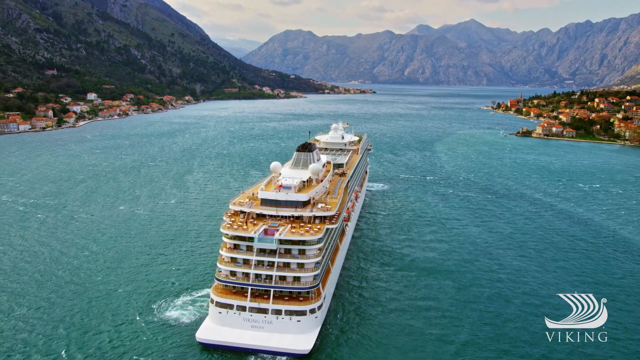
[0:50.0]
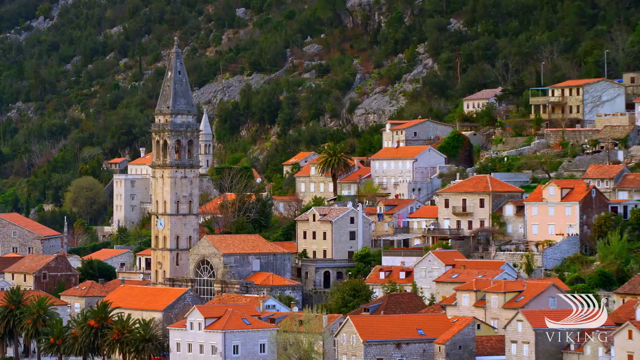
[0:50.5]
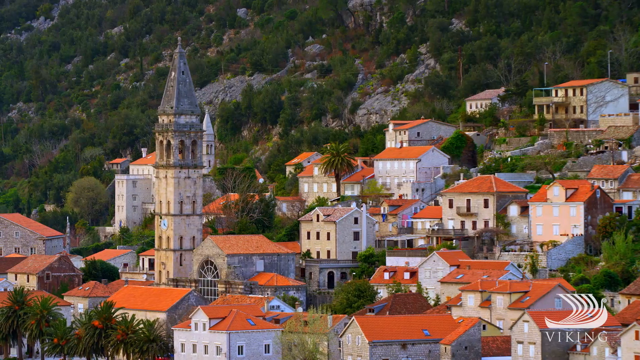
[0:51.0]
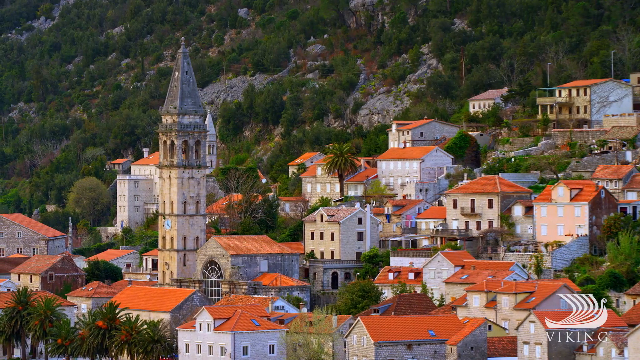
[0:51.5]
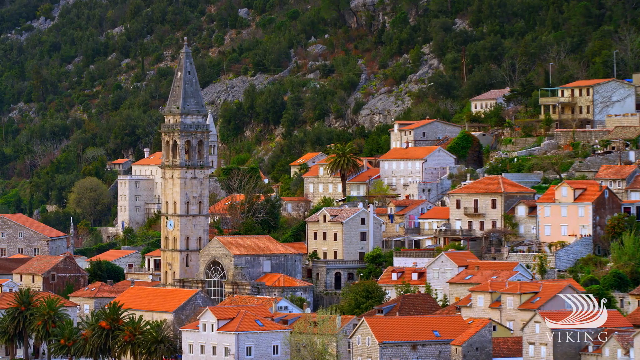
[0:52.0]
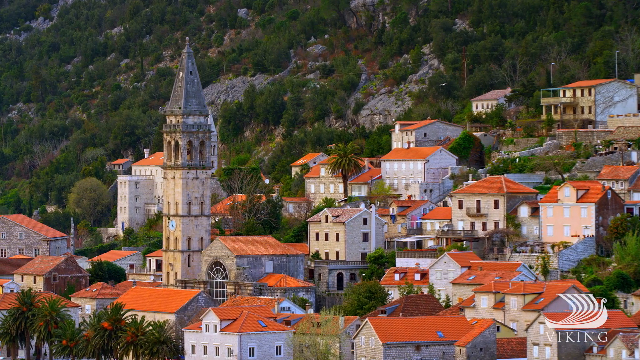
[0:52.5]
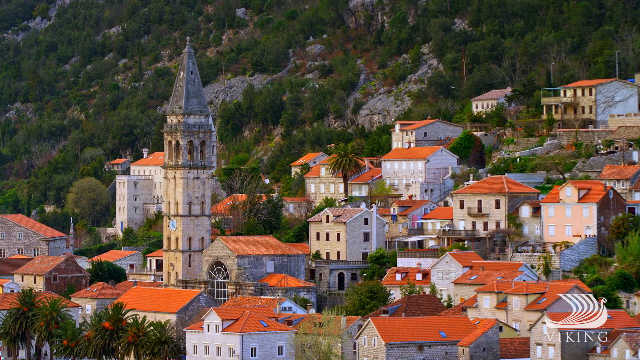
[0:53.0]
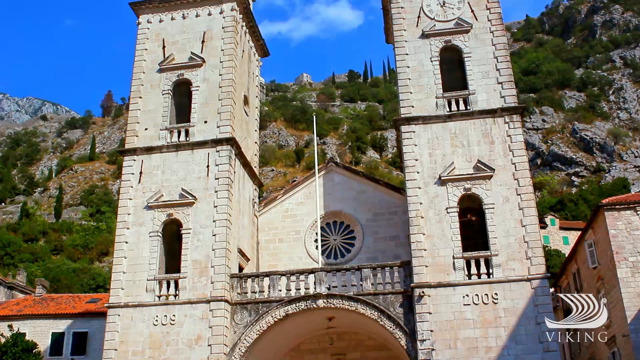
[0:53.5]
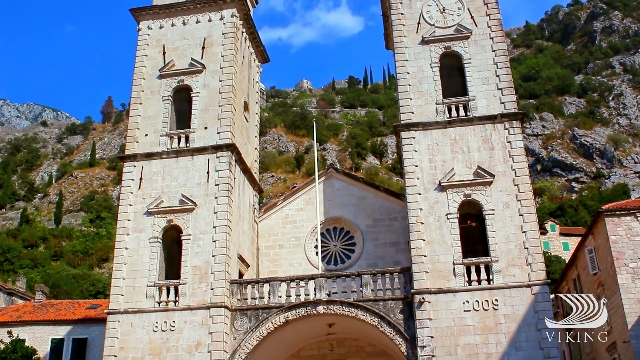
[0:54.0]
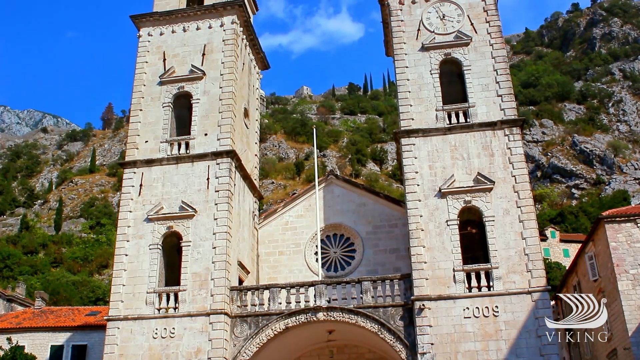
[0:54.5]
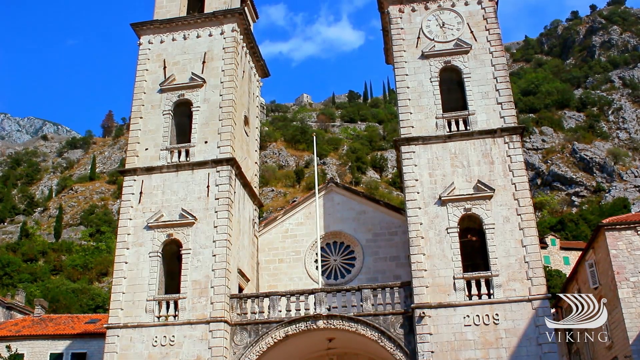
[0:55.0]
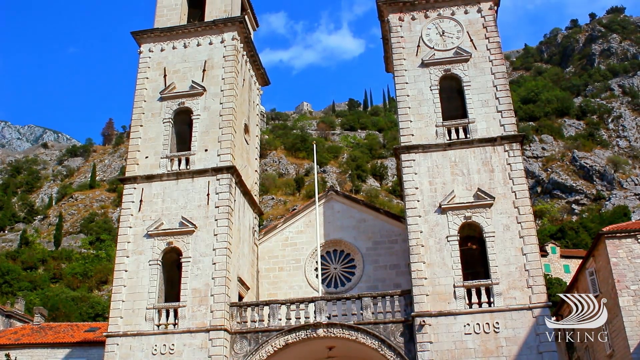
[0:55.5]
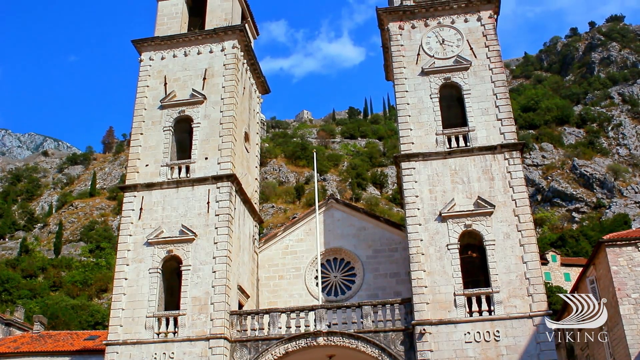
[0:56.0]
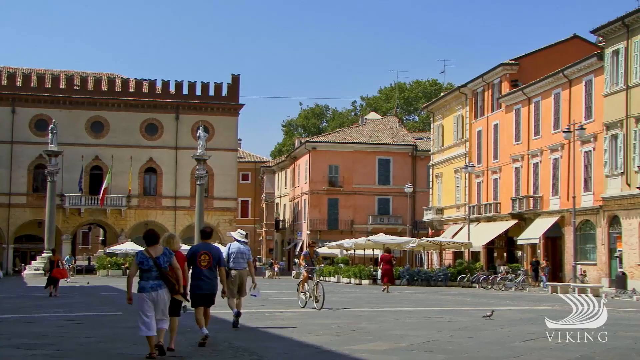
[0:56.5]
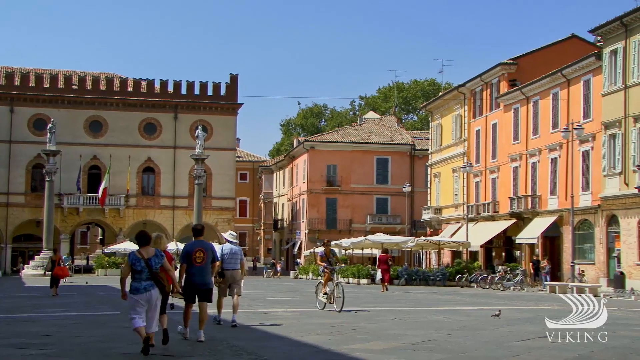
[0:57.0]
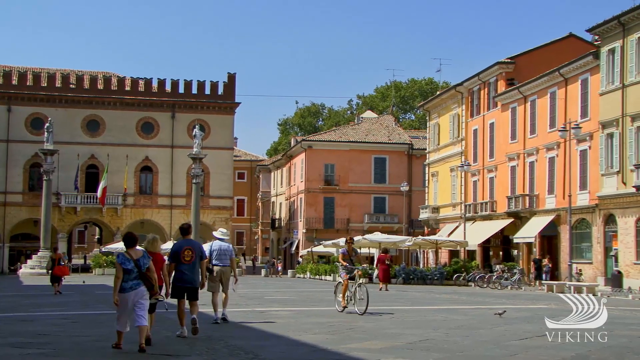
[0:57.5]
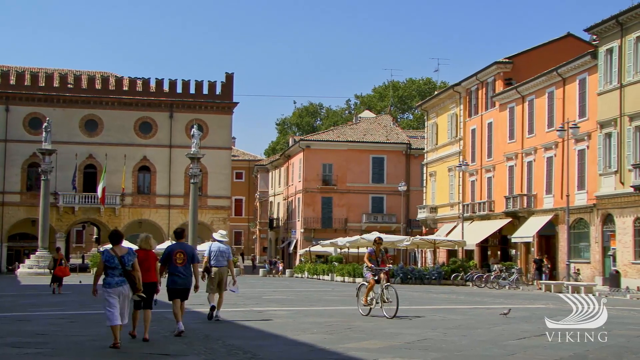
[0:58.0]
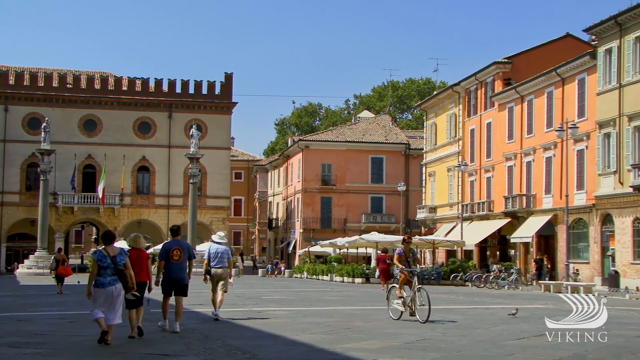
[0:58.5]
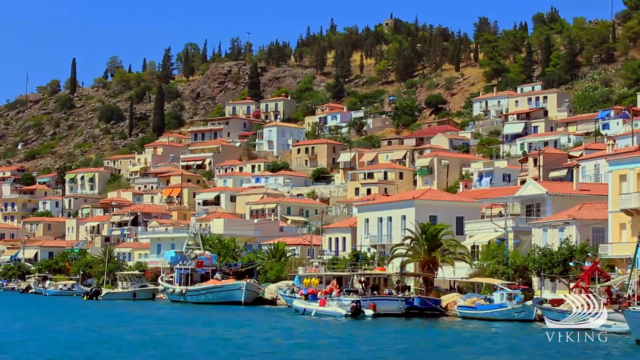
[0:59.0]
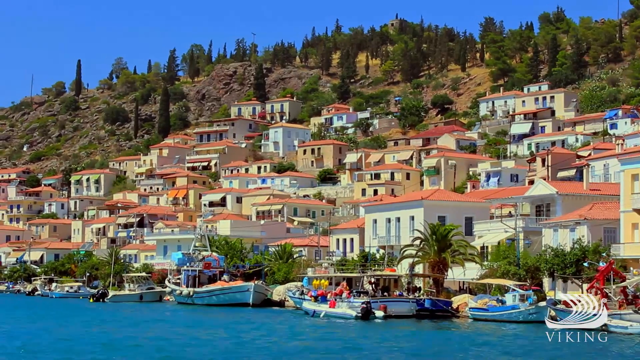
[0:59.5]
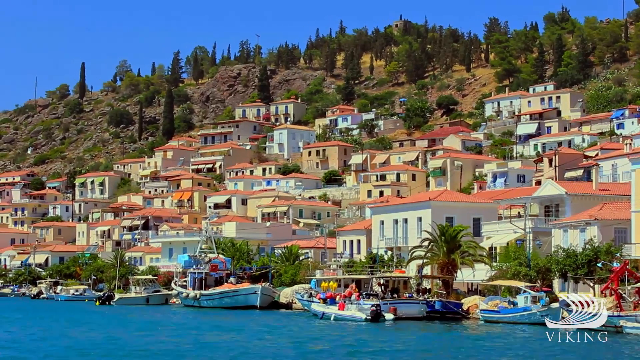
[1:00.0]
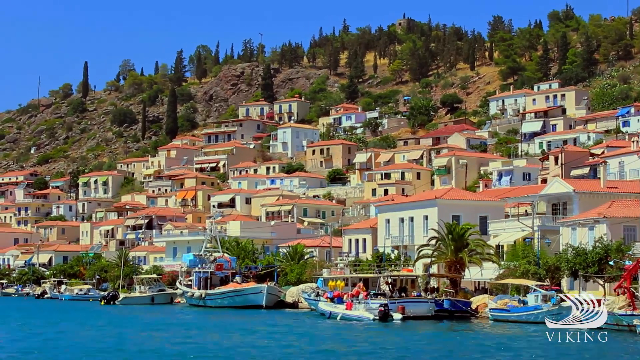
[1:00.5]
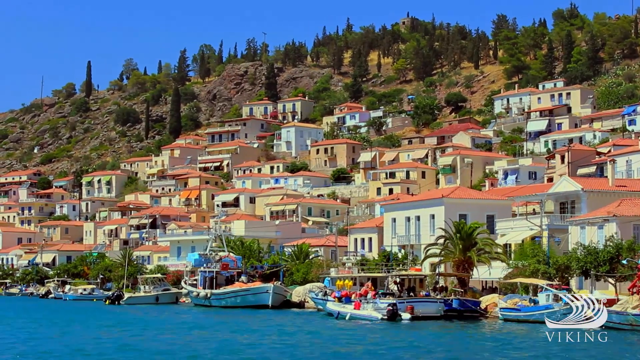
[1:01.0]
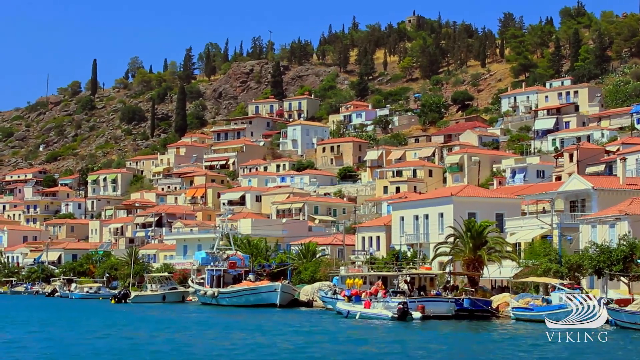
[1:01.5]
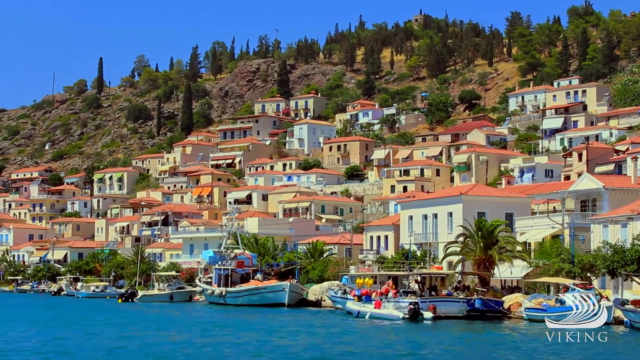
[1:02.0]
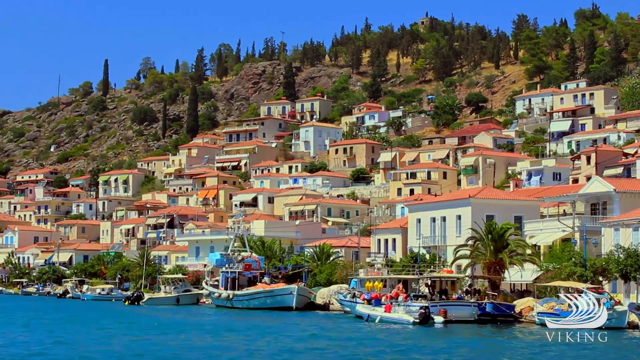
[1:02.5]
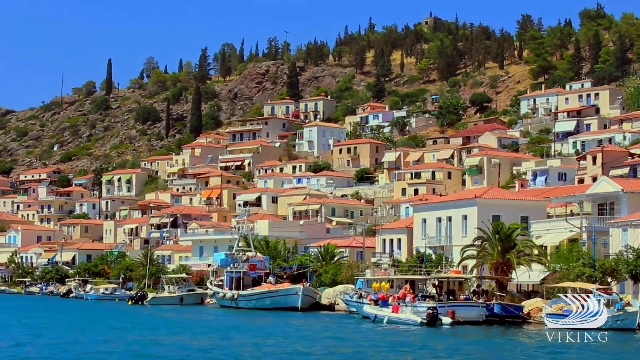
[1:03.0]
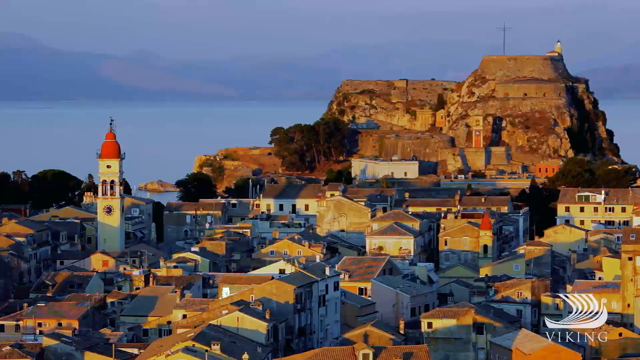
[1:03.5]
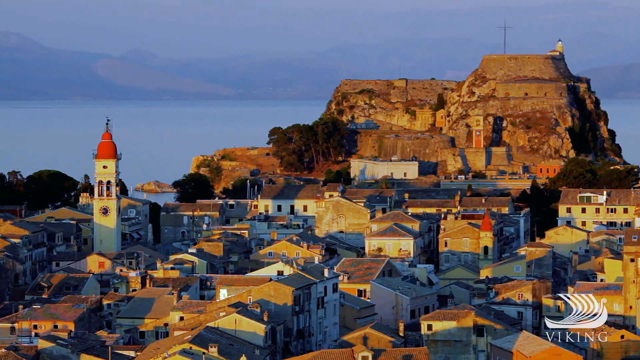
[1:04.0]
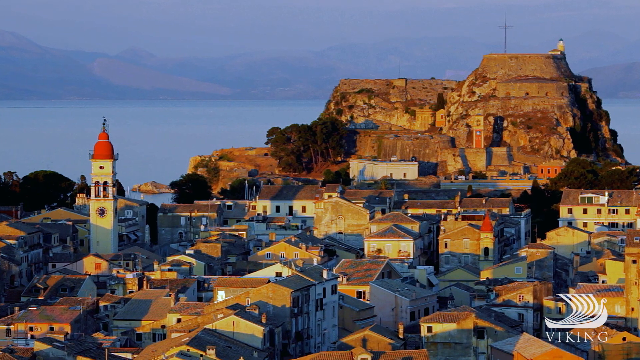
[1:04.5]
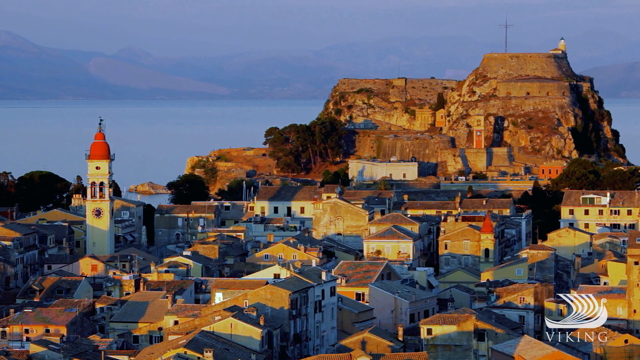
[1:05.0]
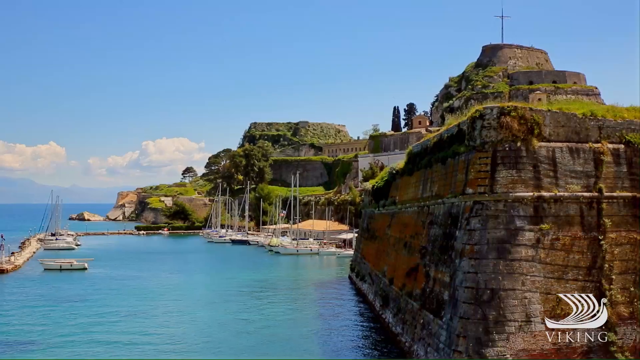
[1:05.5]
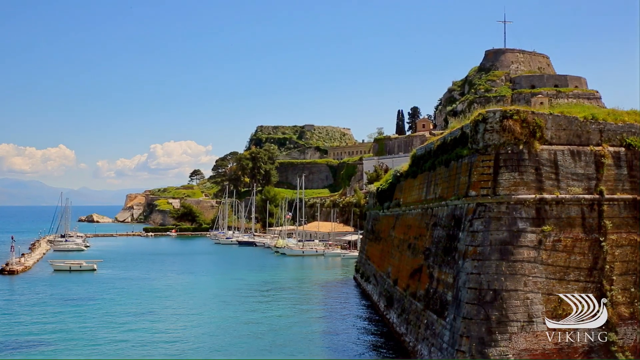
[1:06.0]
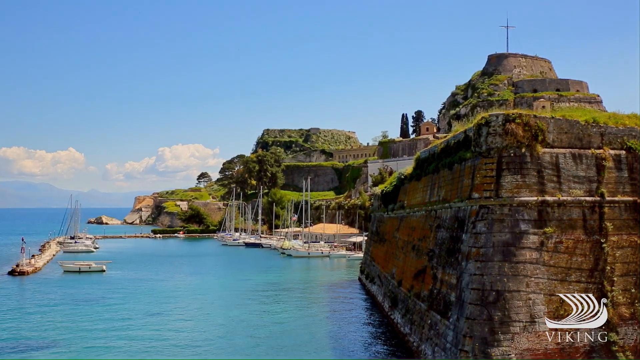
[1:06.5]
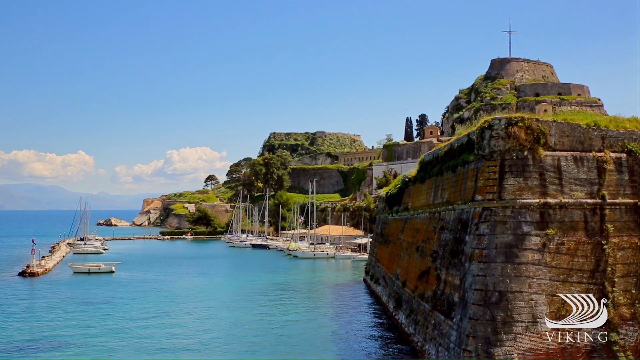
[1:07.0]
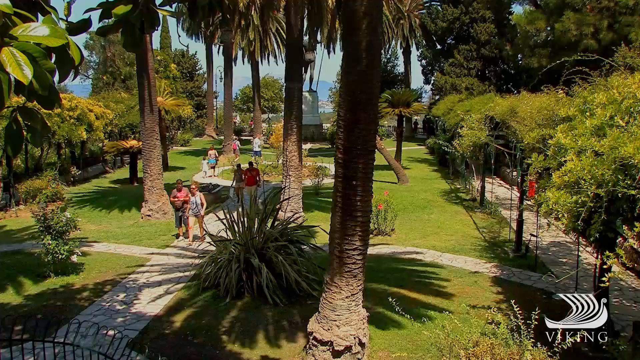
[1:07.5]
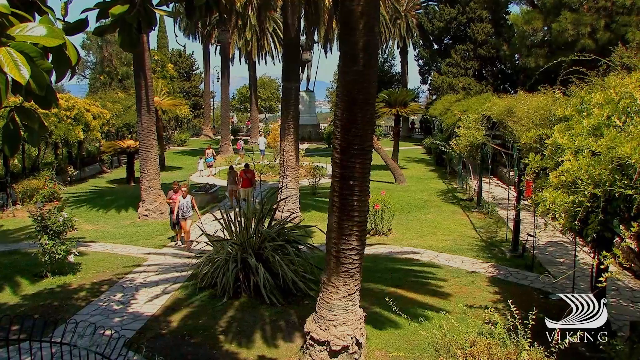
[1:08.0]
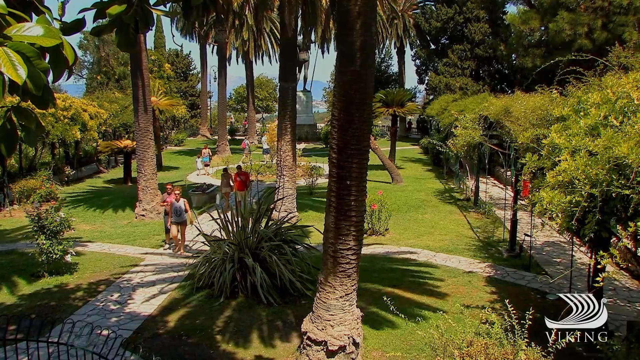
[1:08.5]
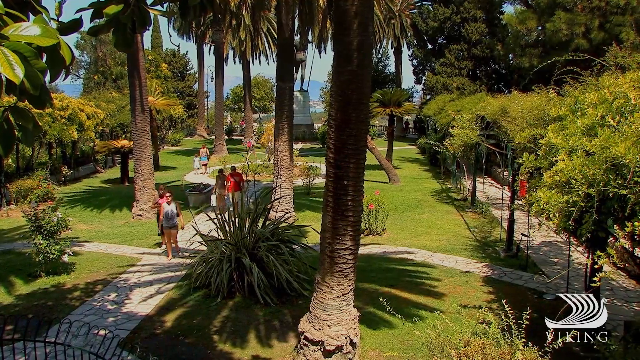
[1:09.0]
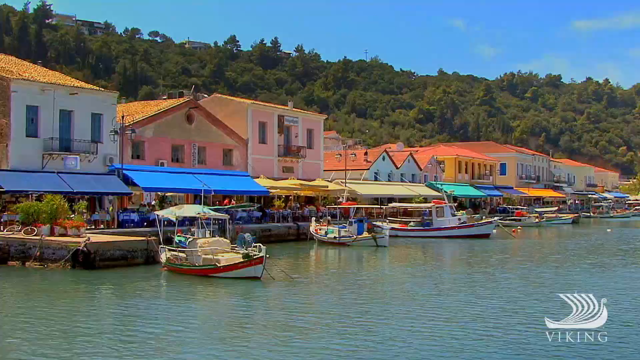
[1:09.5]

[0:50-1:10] The view pans over the red-roofed area and the tower seen earlier; the images are still photographs with panning up or over to create movement. A white building appears to have a tower on each side with the church building in the middle, a clock on top of the right side, and a rocky hillside in the background. A city scene shows buildings in peach, orange and yellow, with someone riding a bike in the street and the backs of people walking. A view from the water looks up at many orange-roofed buildings built up the hill. A white tower with a red top is on the left, surrounded by many houses, with a rocky hill close behind. Small mossy hills that look like they are made of stone appear next, possibly a marina with boats parked. A manicured garden with palm trees and people strolling follows, possibly a park. Finally, what looks like a coastal market shows boats pulled up to market stands with very colorful roofed canopies, buildings and trees in the background, the water, and a very blue sky.